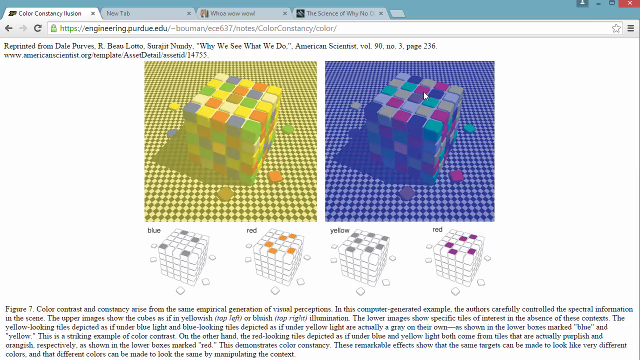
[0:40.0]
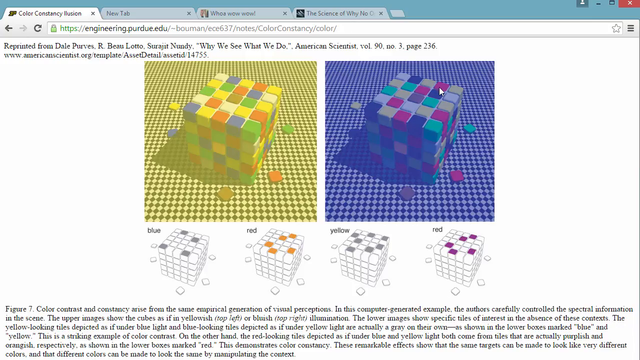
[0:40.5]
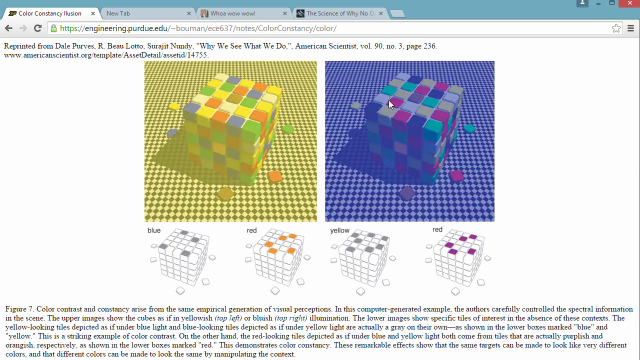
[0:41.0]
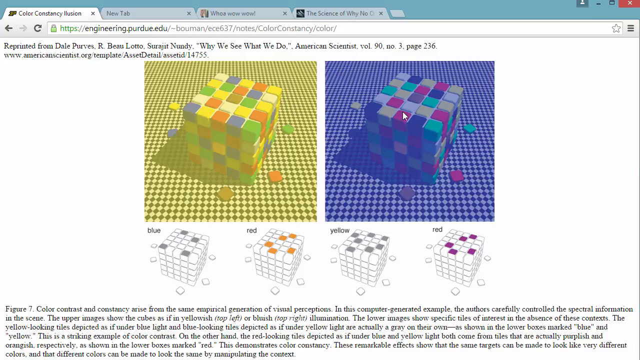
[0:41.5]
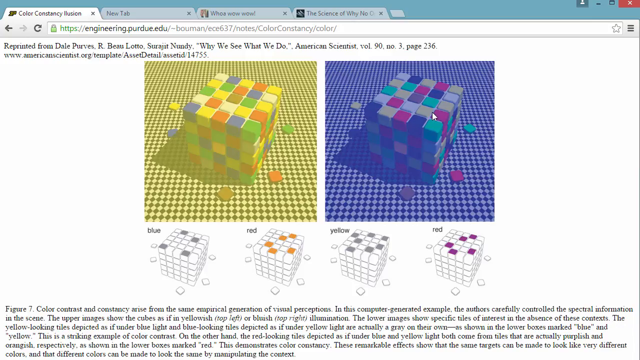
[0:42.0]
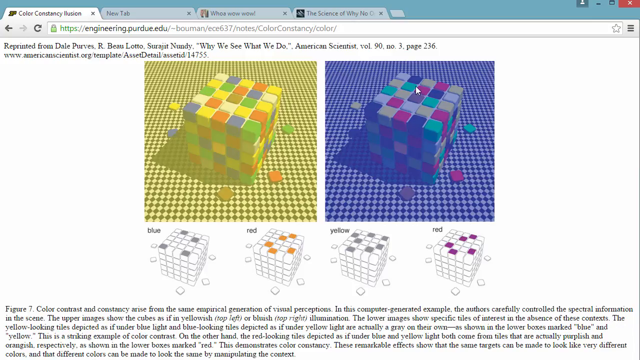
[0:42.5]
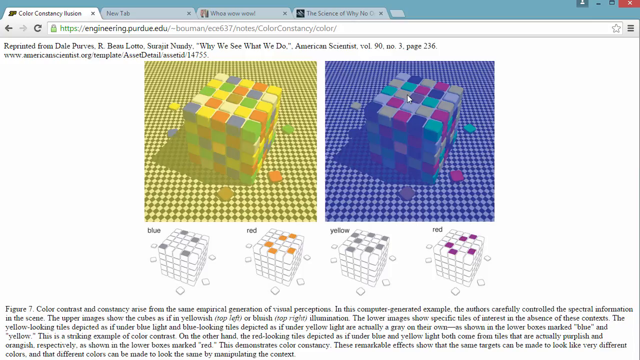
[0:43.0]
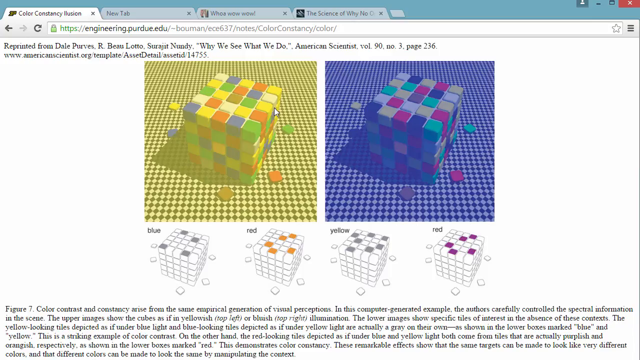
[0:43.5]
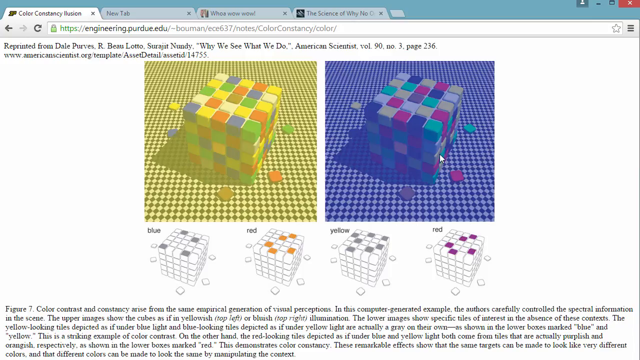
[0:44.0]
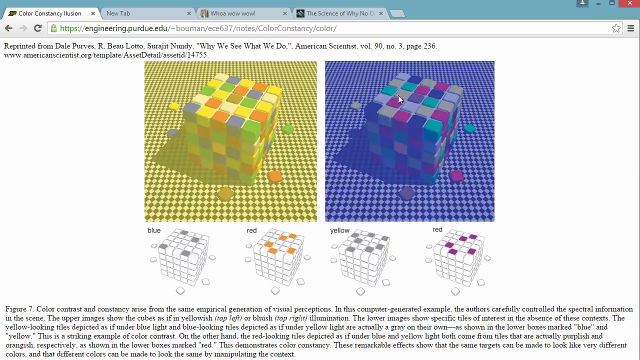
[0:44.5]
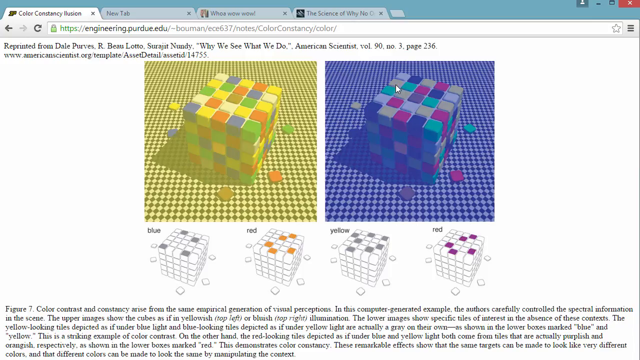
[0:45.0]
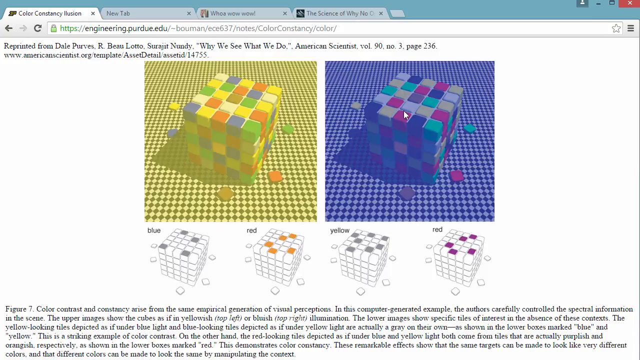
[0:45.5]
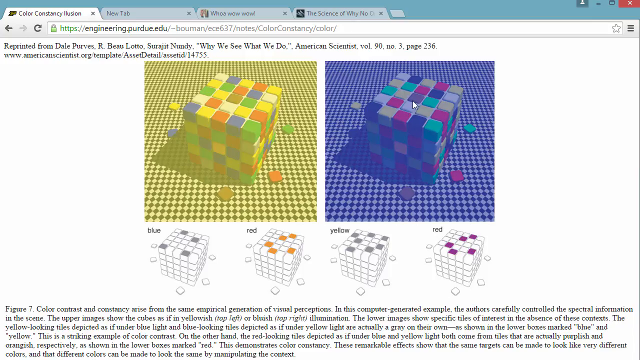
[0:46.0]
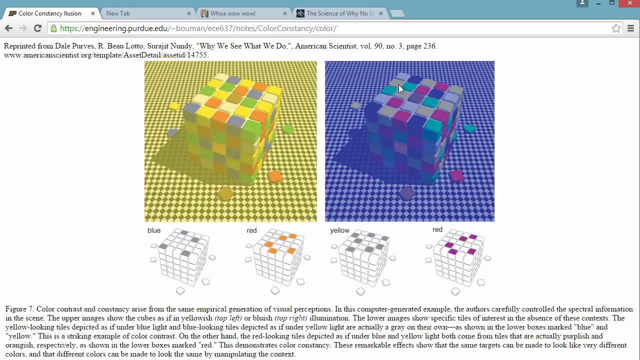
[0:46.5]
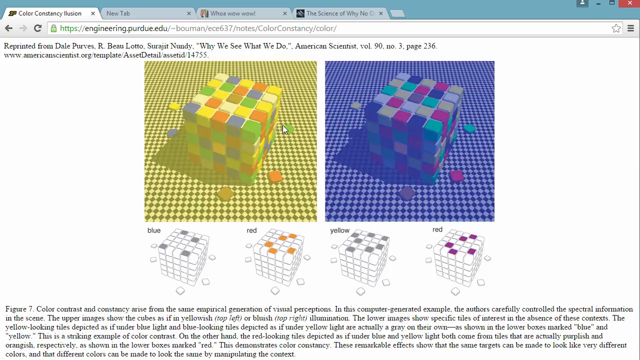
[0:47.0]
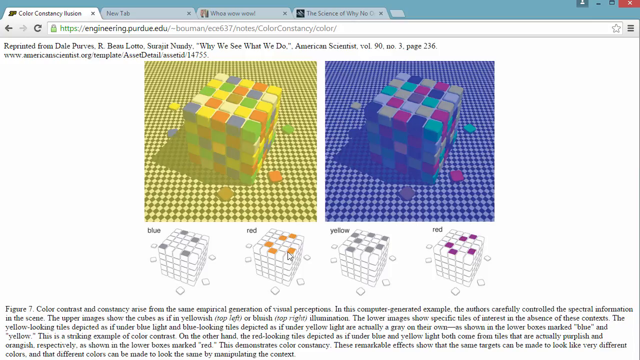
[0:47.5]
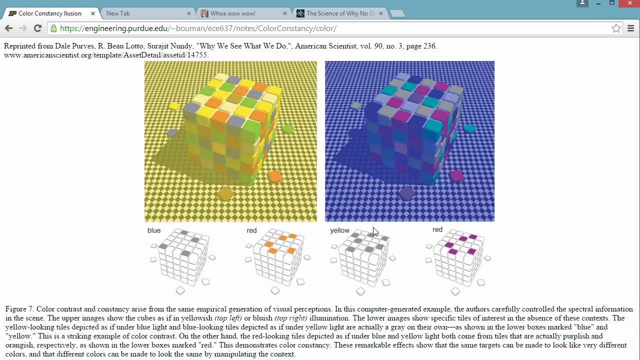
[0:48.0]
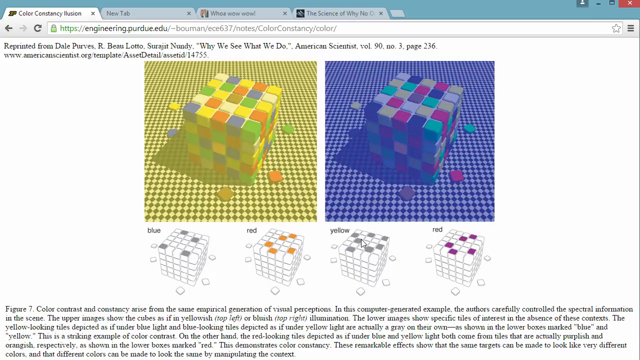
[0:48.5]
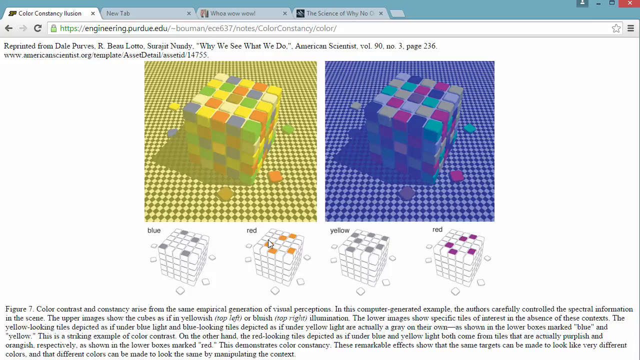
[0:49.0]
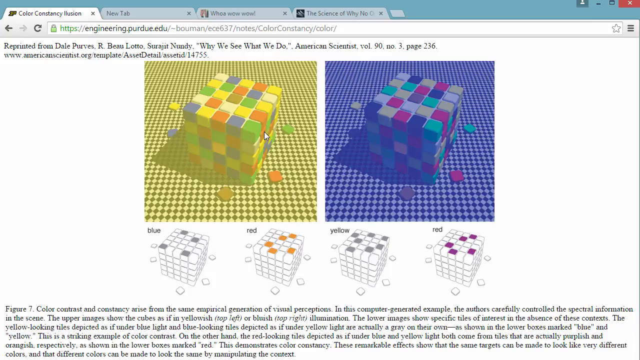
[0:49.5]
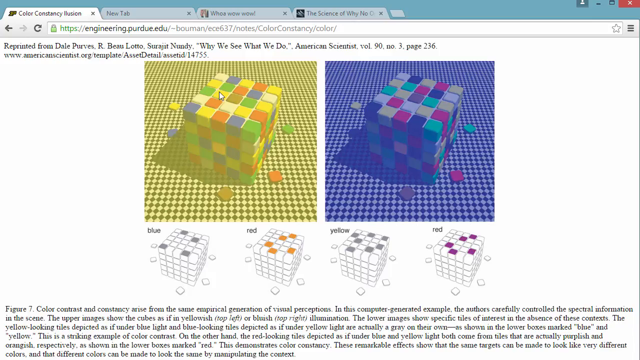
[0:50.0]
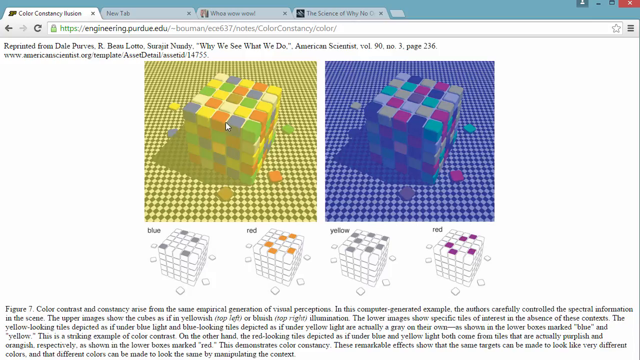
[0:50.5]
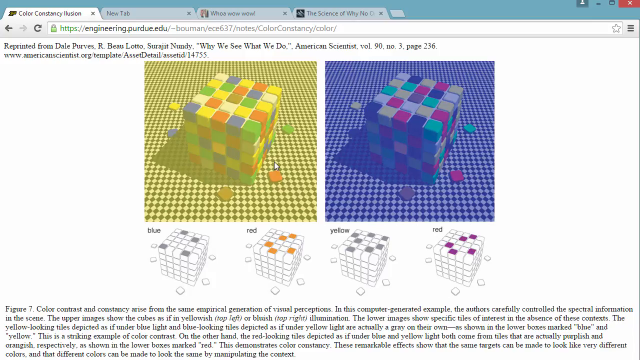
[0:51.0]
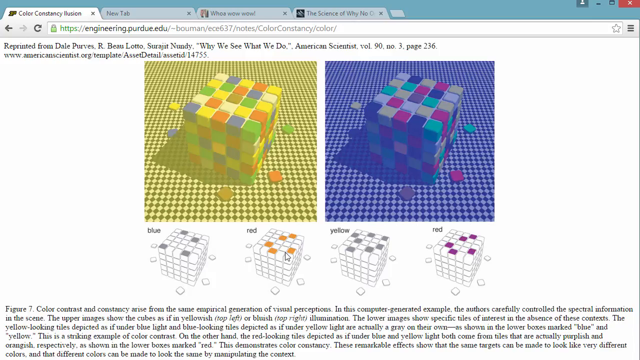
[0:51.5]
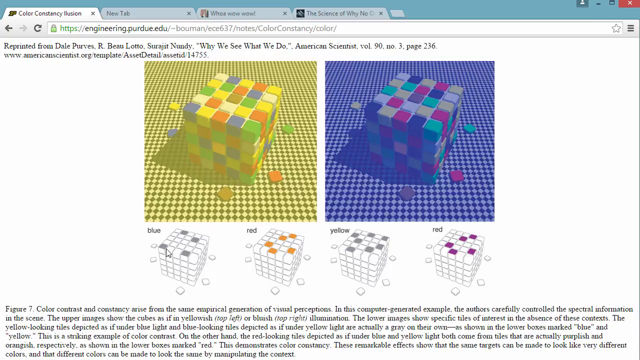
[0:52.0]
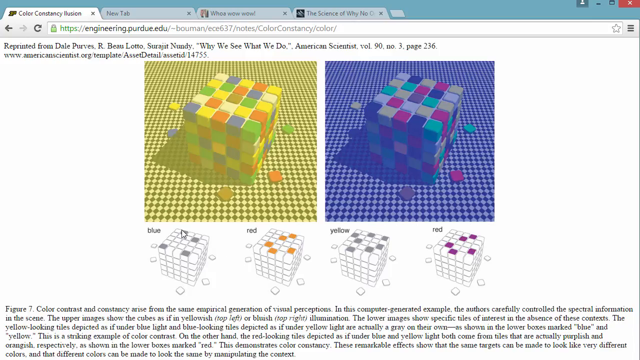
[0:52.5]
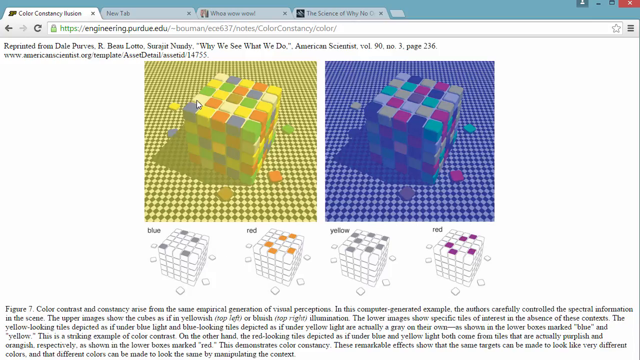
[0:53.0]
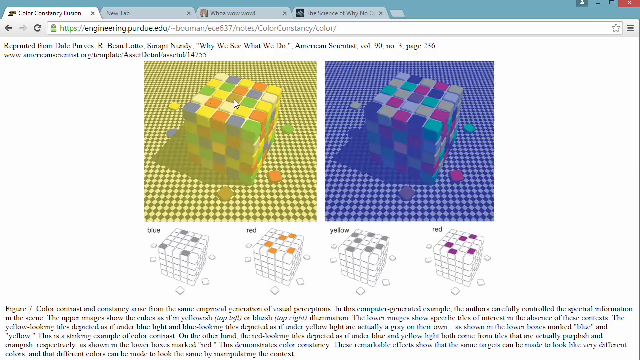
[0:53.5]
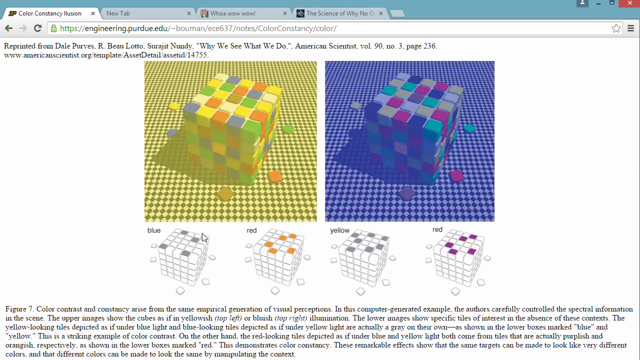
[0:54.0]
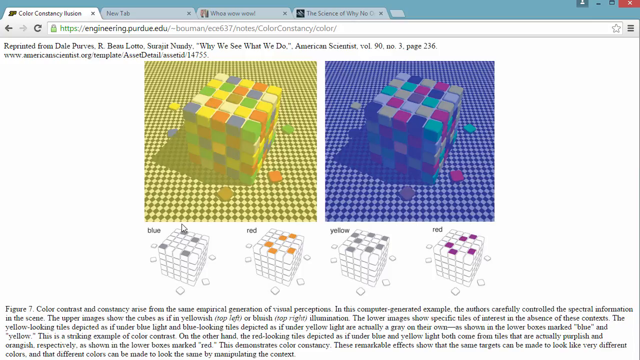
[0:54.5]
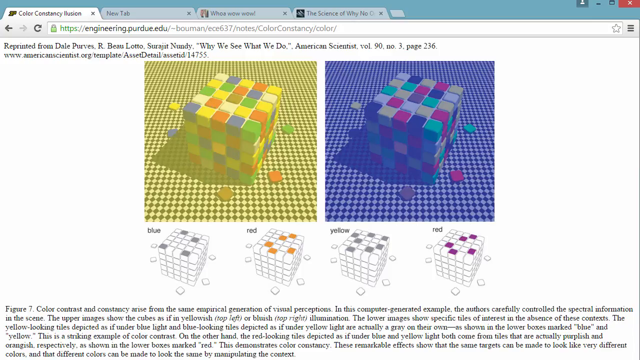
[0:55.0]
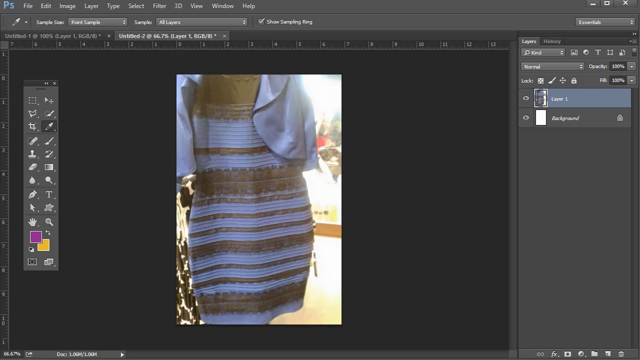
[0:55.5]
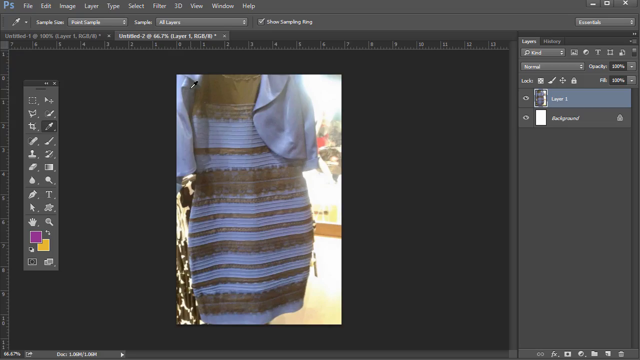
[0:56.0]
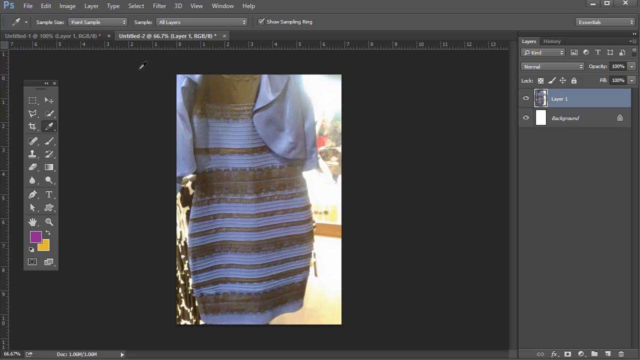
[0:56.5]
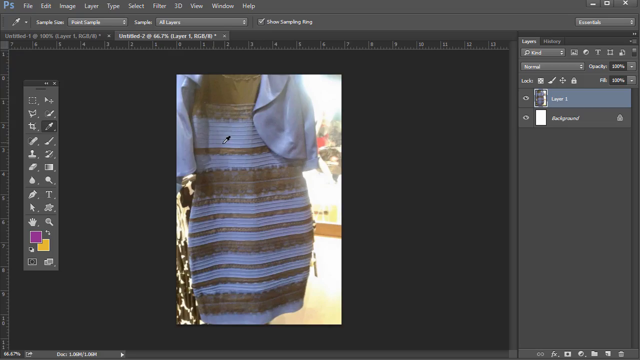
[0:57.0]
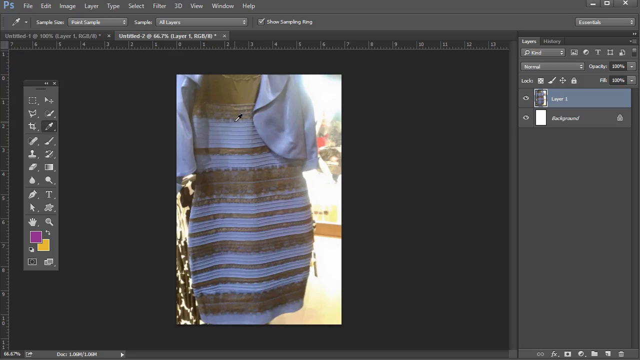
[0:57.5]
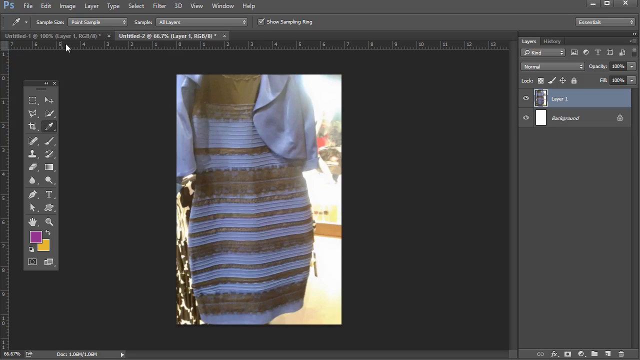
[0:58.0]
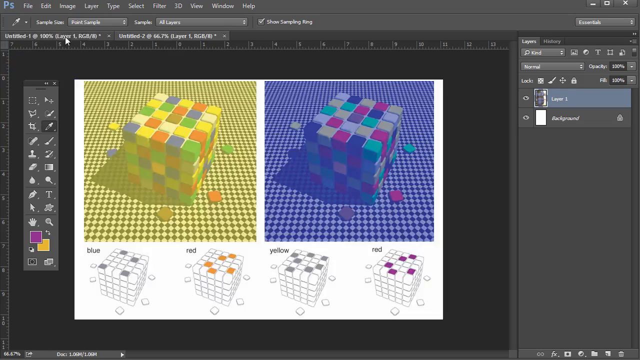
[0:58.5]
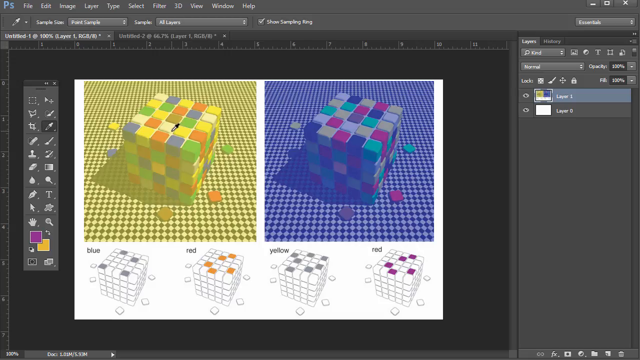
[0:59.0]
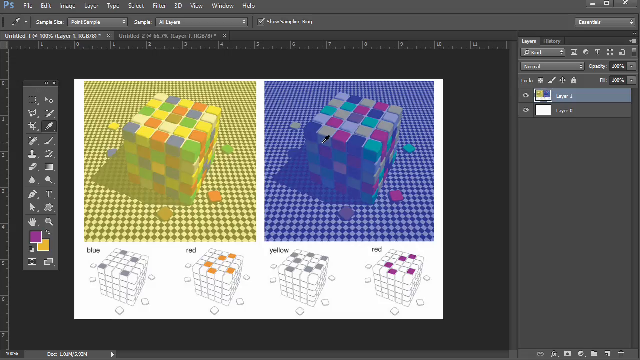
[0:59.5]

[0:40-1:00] A web browser is open with four tabs, the first one focused. It is titled "Constancy Illusion" and is from the engineering.purdue.edu website. The second tab appears empty and is titled "new tab", the third is titled "whoa, wow, wow", and the fourth is "the science of why no one". The page shows a Rubik's Cube-like figure in two pictures that apparently have the same colors but different overlays, one yellow and one blue, so they look very different. The mouse moves around the pictures to showcase the effects of the different overlays.